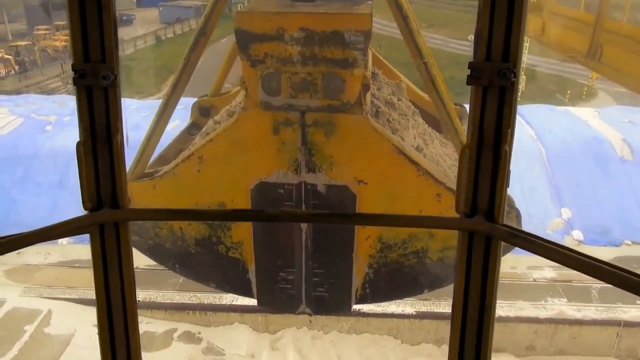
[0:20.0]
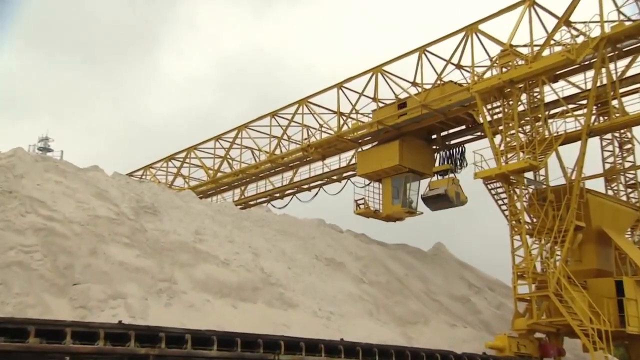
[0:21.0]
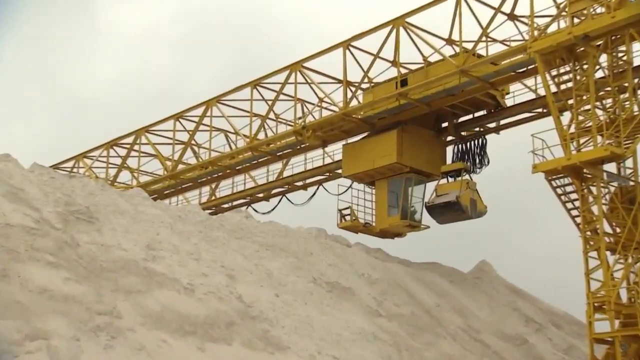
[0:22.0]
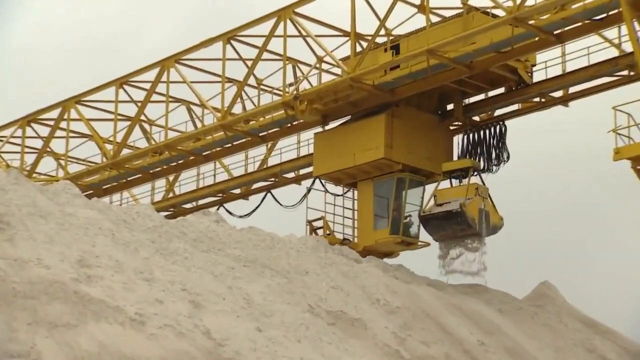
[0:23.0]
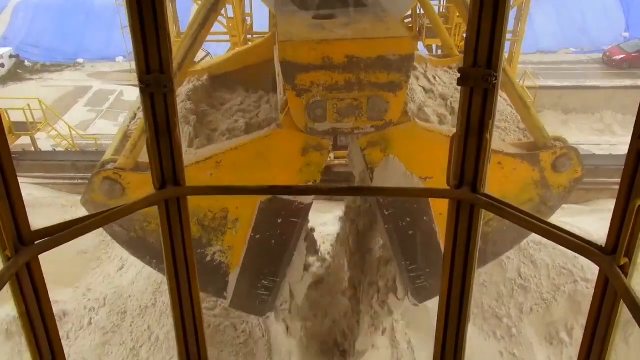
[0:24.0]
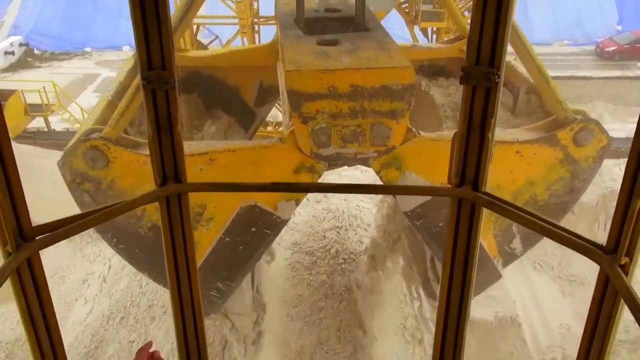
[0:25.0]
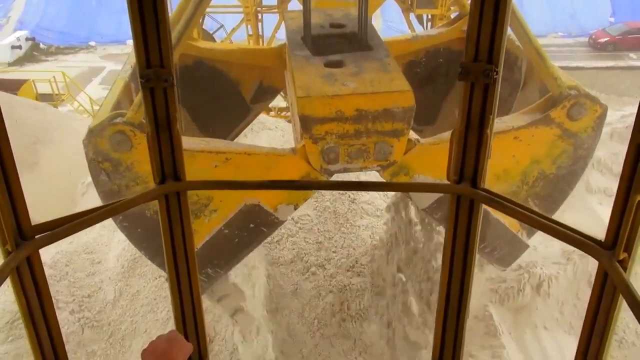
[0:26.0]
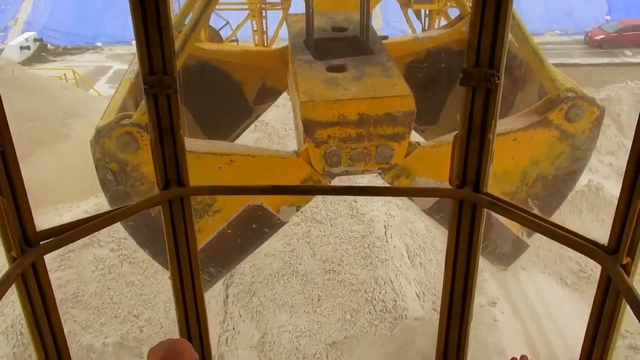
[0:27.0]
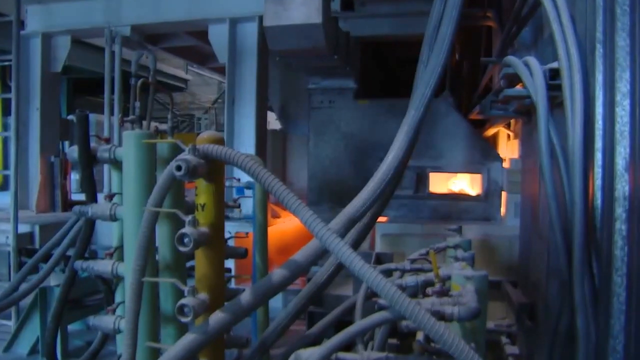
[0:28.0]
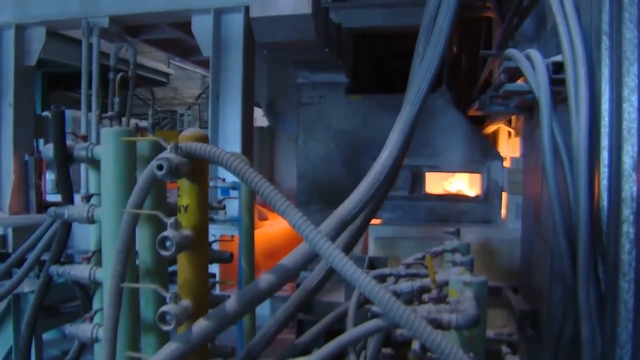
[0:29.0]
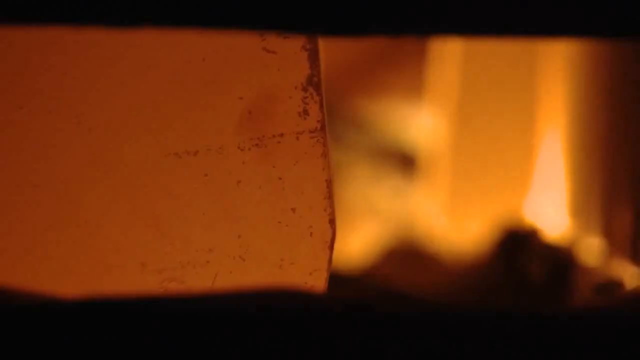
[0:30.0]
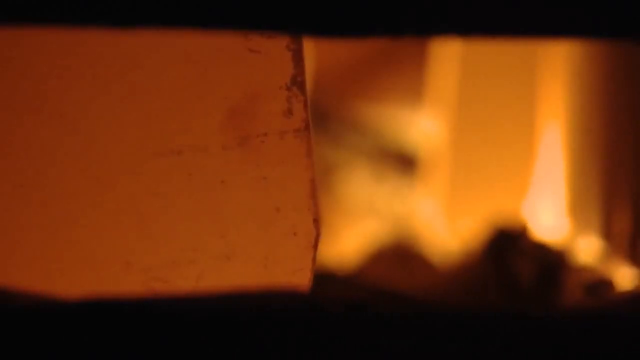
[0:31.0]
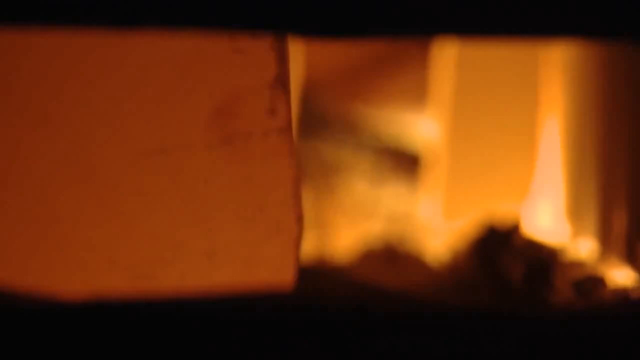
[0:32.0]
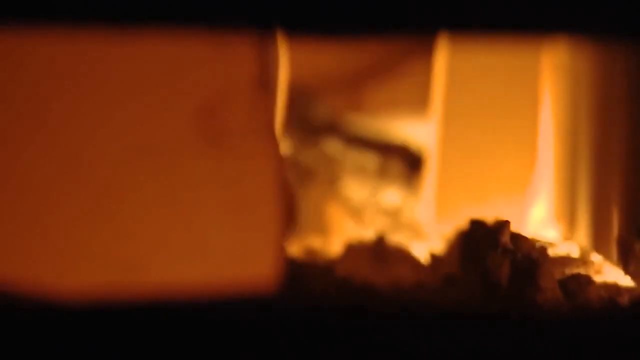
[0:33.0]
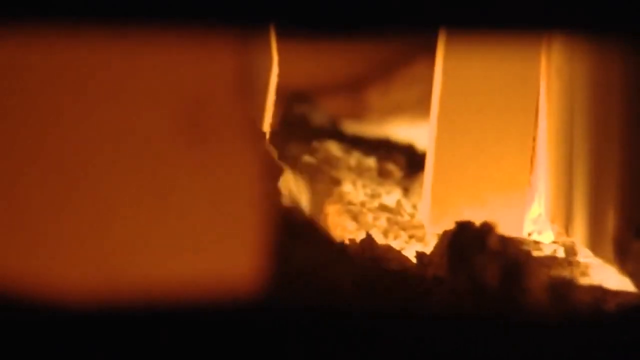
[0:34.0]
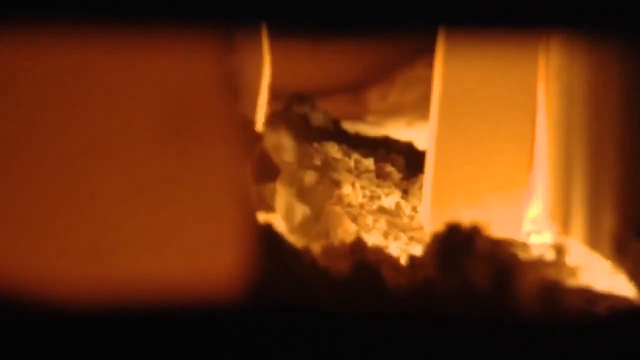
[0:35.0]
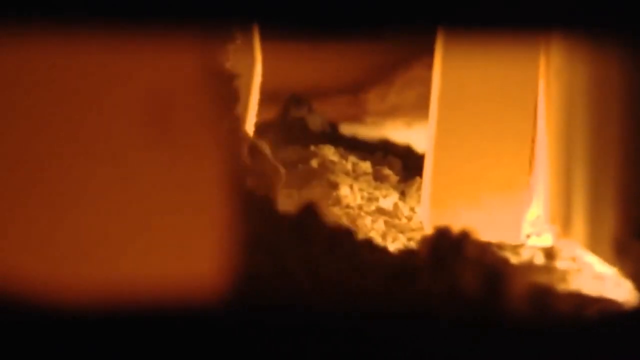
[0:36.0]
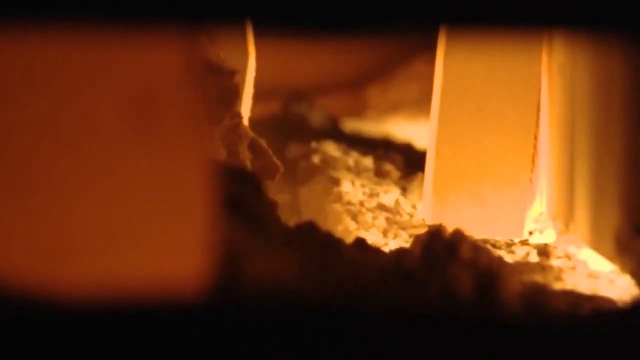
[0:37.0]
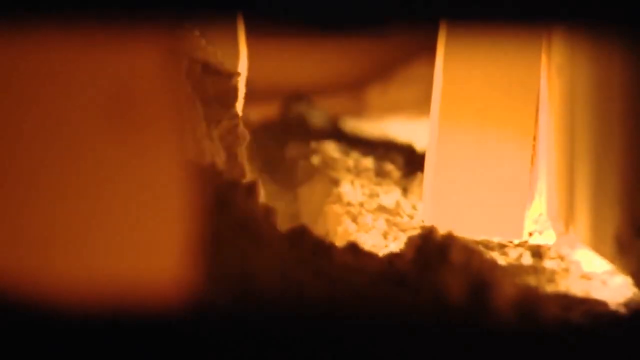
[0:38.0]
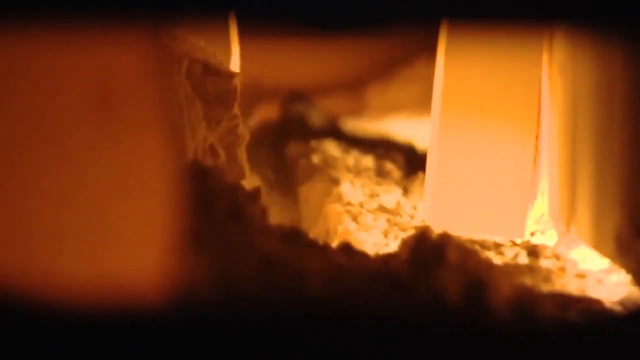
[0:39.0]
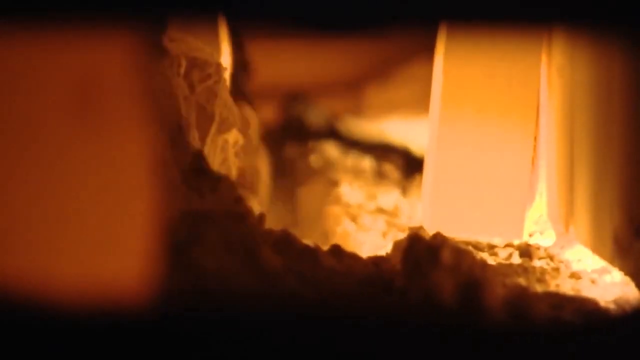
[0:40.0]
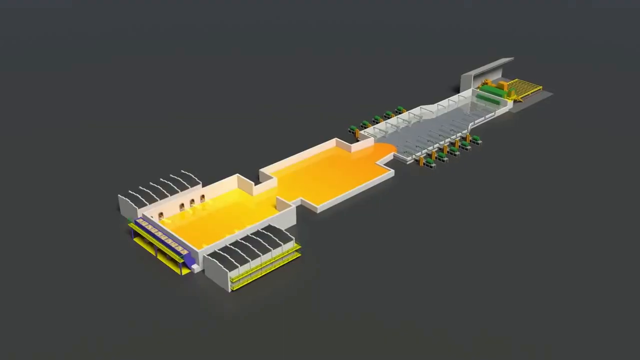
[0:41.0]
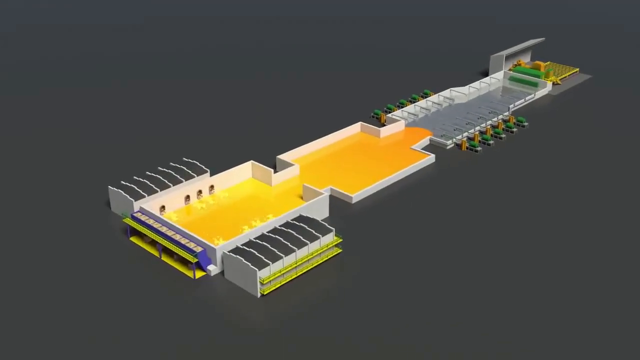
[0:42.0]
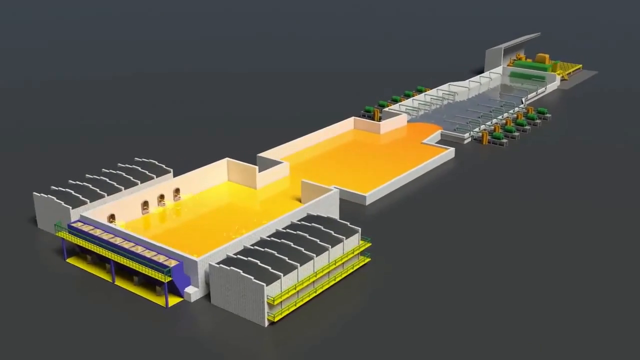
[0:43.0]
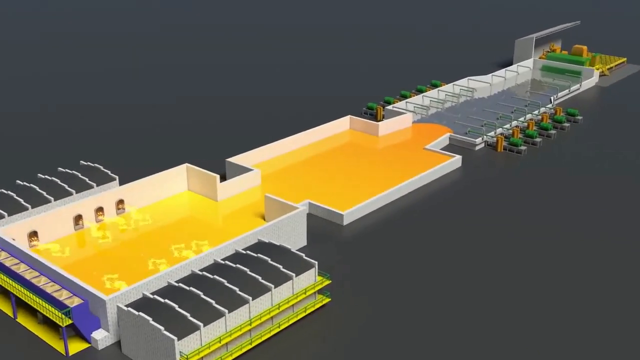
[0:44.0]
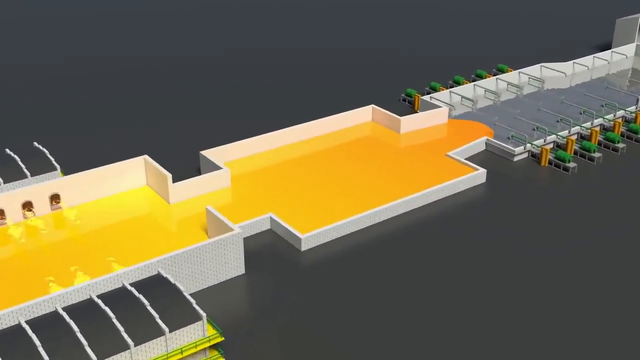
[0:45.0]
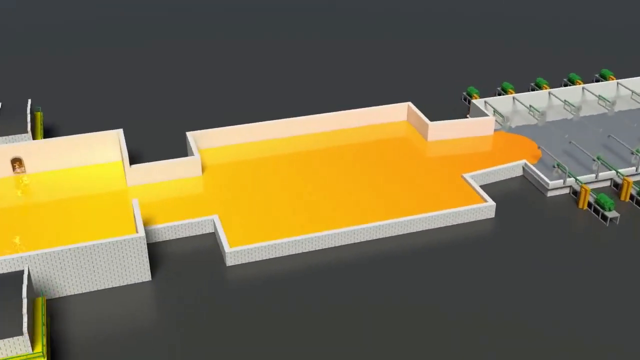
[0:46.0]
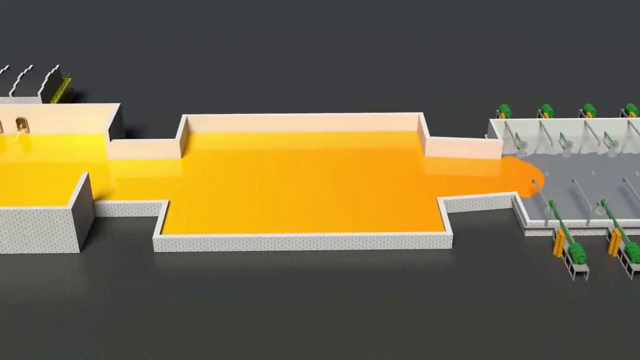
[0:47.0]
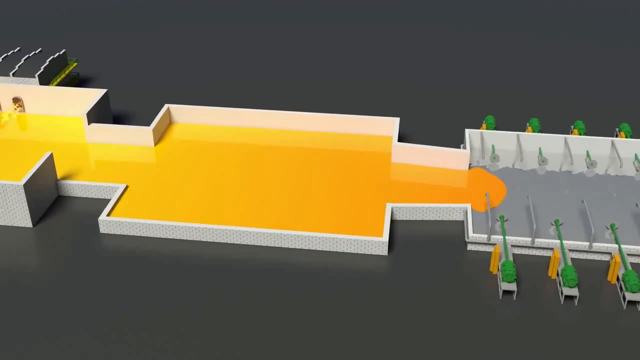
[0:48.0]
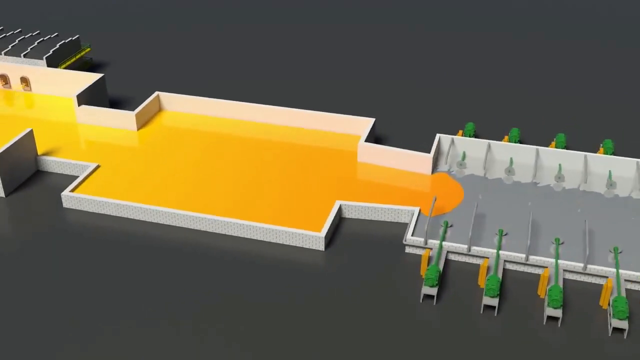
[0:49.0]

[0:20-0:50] The heavy bulldozer shovel with sand in it is moved, and a bigger sand mound is shown. The video transitions to a very dark maintenance room with metallic pipes and other machinery all around, and the view slowly zooms in. Next comes an industrial oven of burning hot coals and sand at very high temperatures as sand is poured in. The video then transitions to a 3D design of the machine and how it works, showing different areas, yellow fuel that fuels the machinery, and the compartments that make up the factory and how the compartments of the stationary machinery work. The very detailed diagram is in a 3D bird's-eye view and zooms into specific parts of the factory machinery.